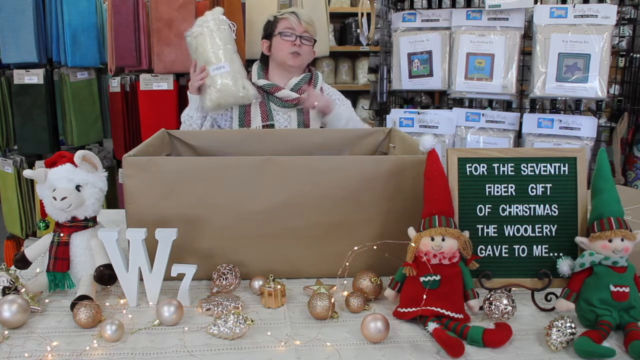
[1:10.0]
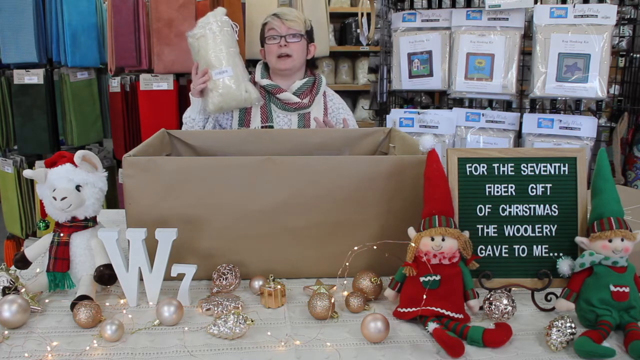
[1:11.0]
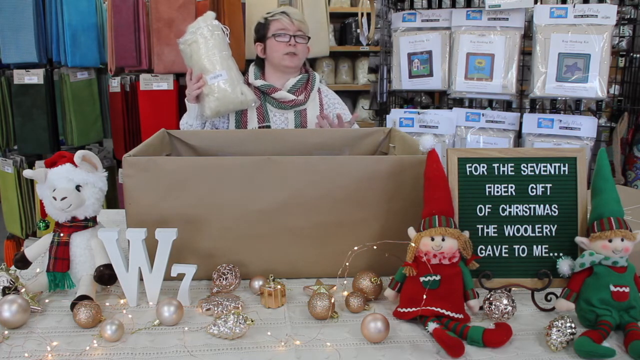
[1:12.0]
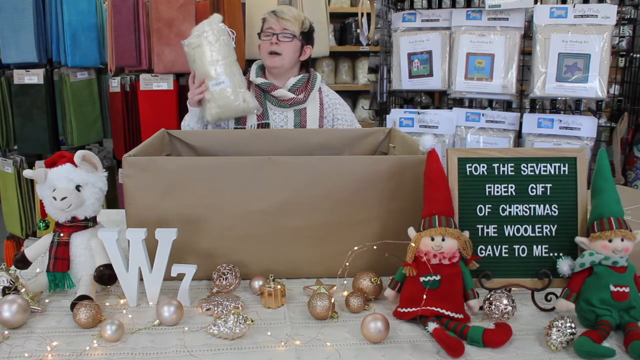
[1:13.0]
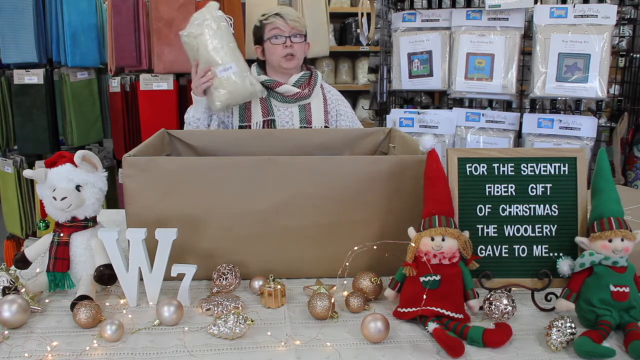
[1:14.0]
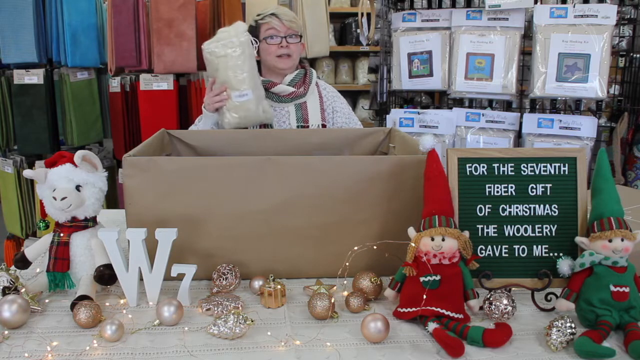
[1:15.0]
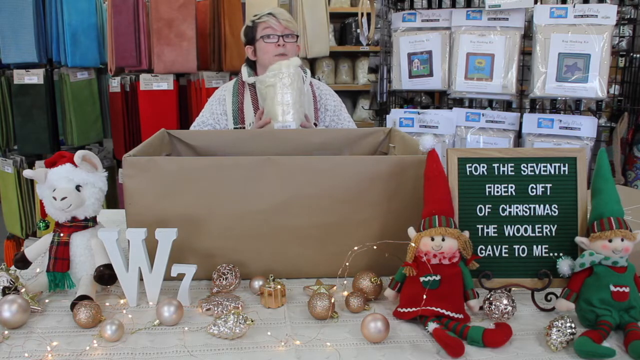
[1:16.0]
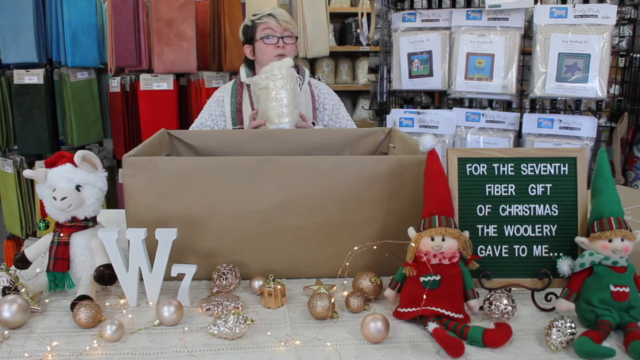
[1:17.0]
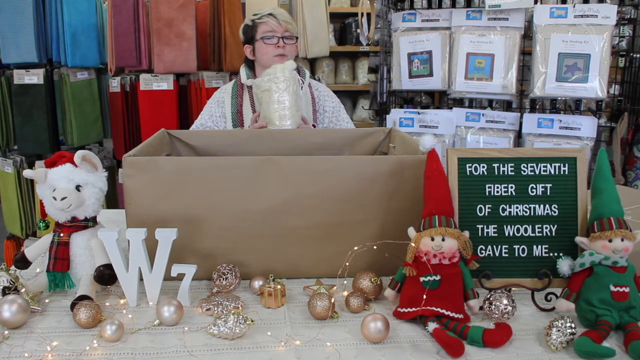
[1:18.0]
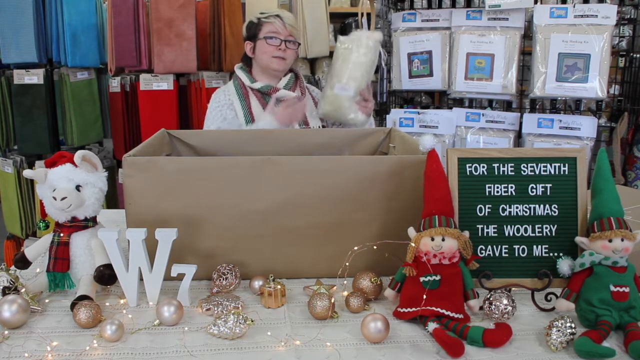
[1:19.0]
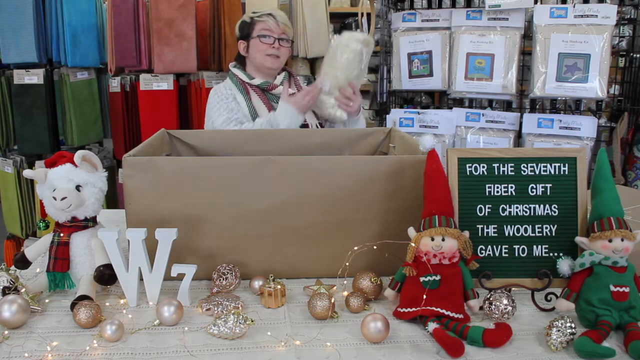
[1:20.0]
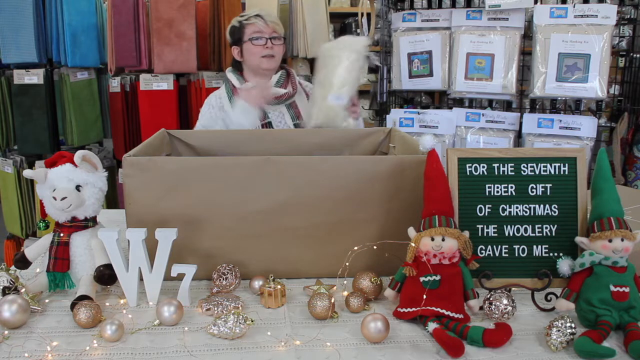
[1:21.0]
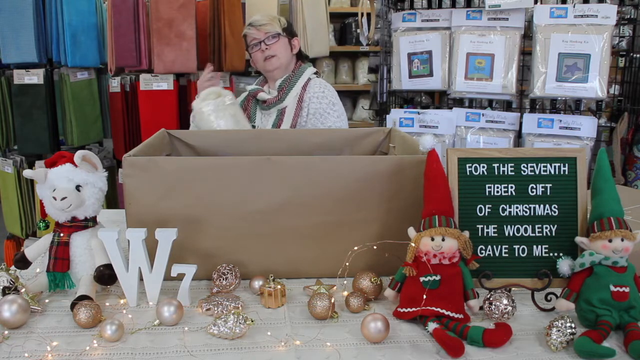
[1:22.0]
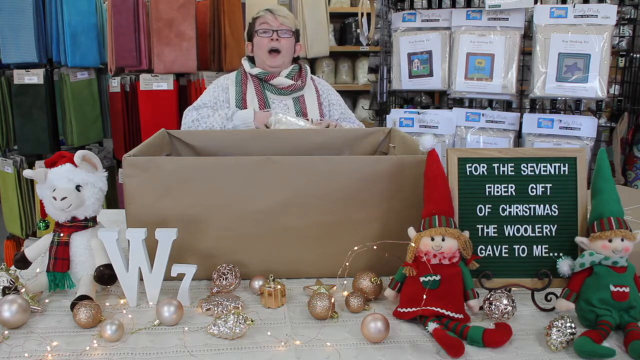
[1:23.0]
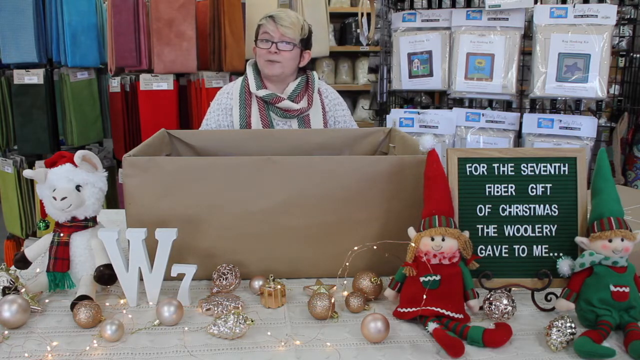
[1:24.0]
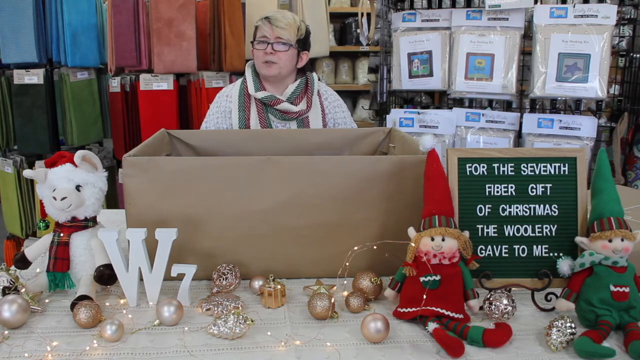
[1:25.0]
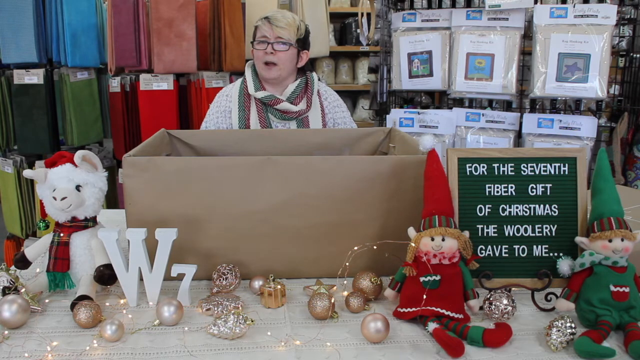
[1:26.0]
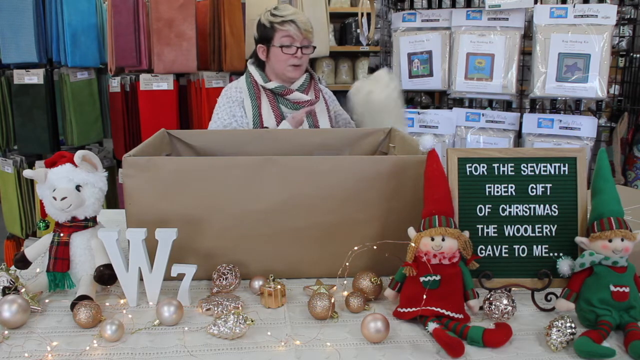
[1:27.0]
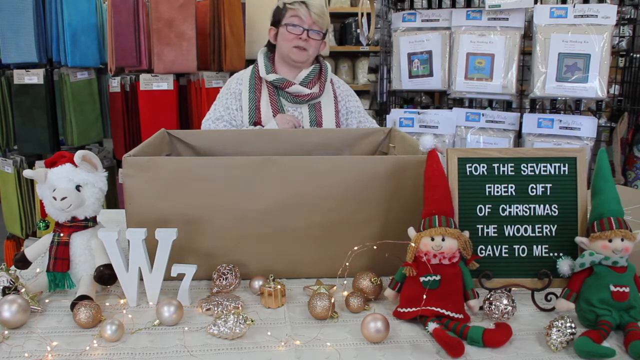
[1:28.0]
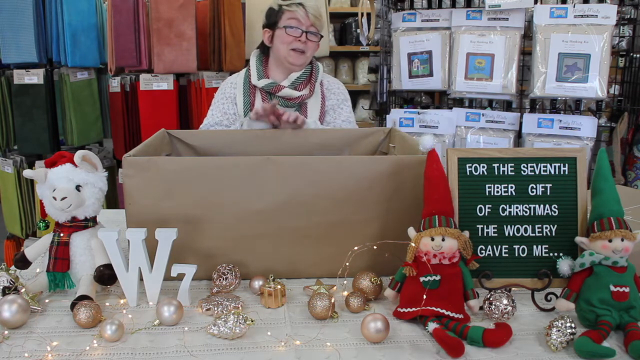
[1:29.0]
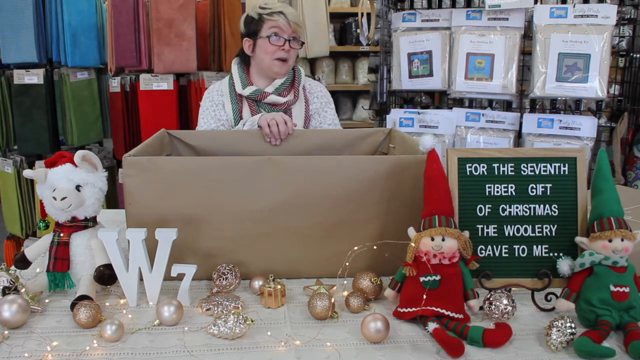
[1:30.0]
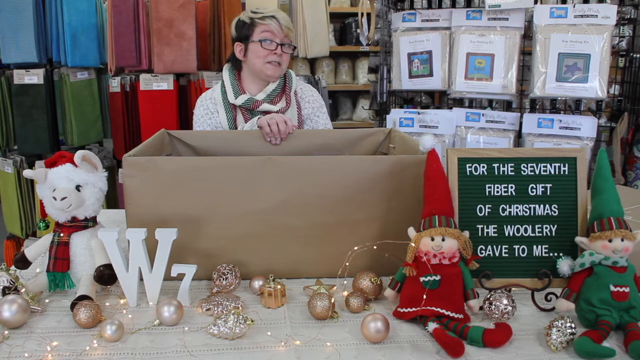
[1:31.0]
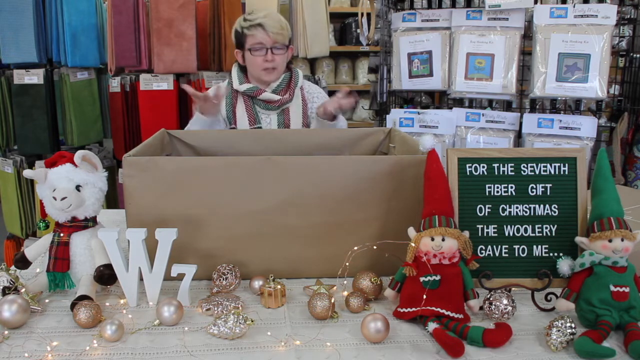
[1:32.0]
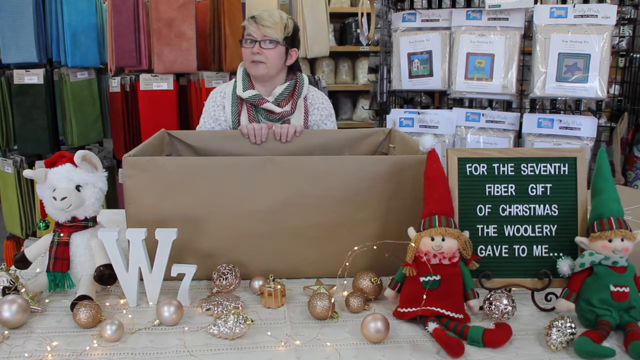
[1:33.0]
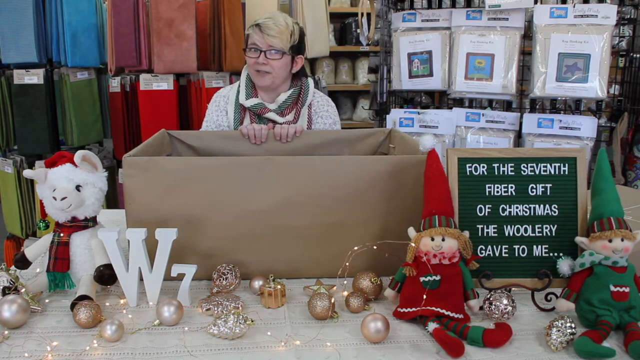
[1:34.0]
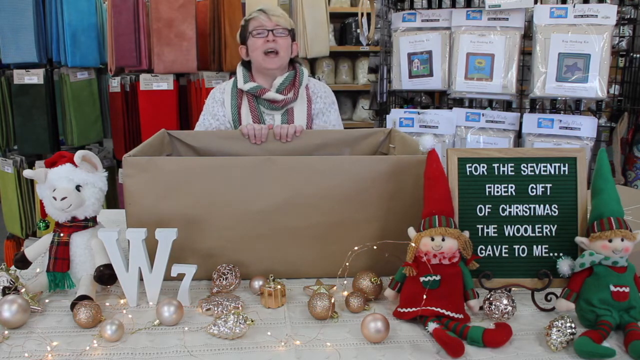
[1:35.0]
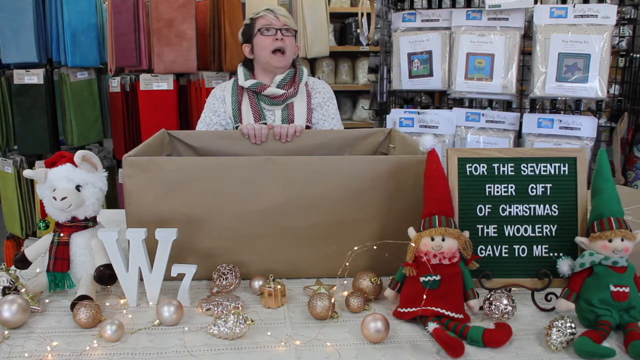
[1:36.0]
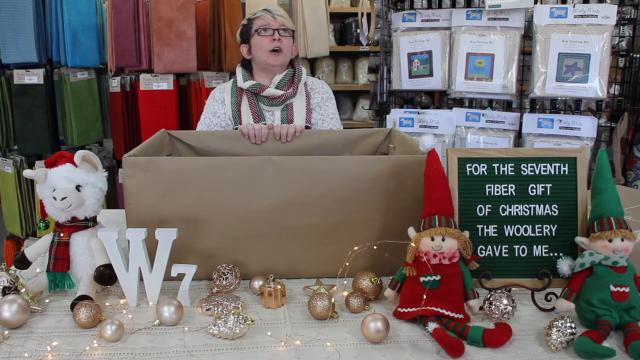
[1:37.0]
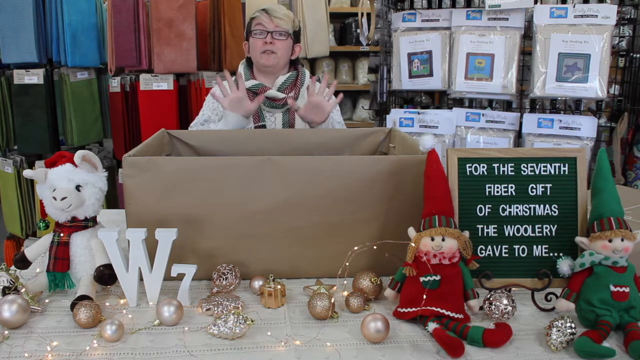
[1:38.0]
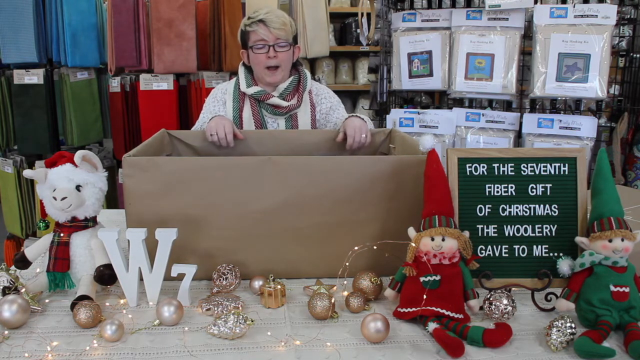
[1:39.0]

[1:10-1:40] A person stands behind a large brown box, wearing a white sweater and a scarf around their neck with green, red and white stripes. The person has short brown hair streaked with blonde highlights and wears glasses, and holds a bag of wool in their hand. To the left of the box is a white stuffed animal wearing a red plaid scarf with green fringes on the end and a red hat. There is a W and a 7 on the table in front of the box. To the right of the box are two stuffed elf toys standing on either side of a signboard that reads "For the seventh fiber gift of Christmas, the Woolery gave to me." The person moves their hands and the bag of wool around, animatedly talking to the camera, and begins to dance a little while holding the wool. They then set the wool down next to the box and place their hands on top of the box as they continue speaking.